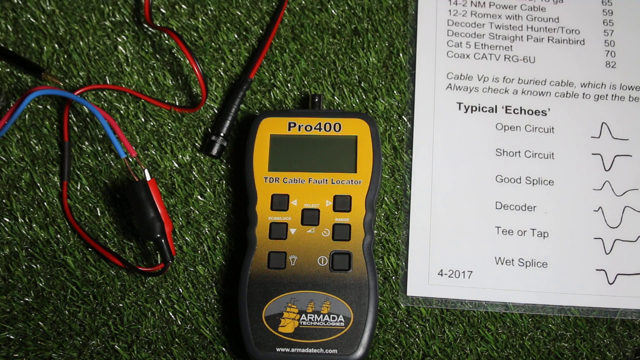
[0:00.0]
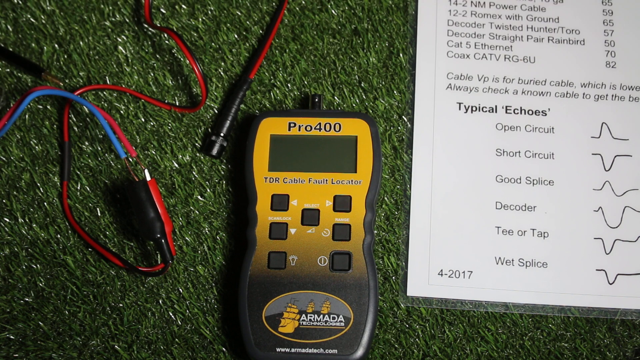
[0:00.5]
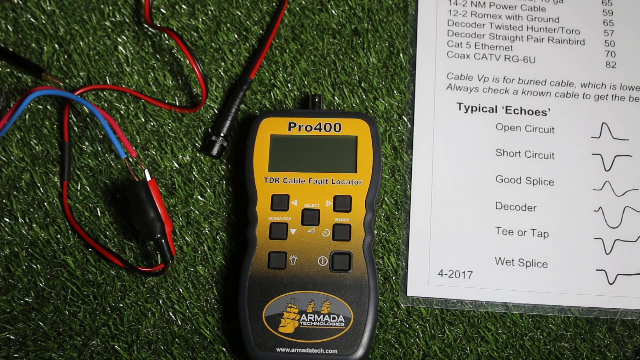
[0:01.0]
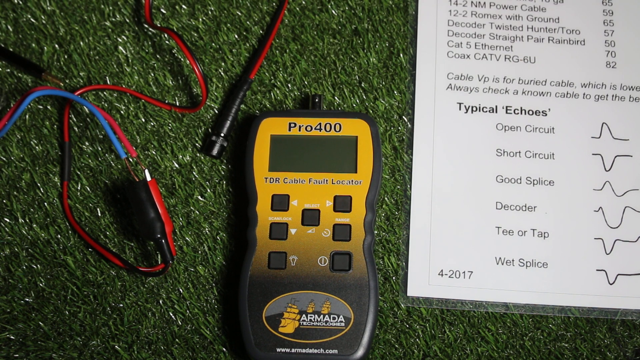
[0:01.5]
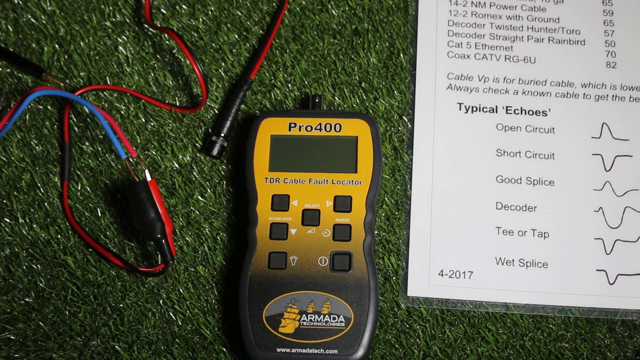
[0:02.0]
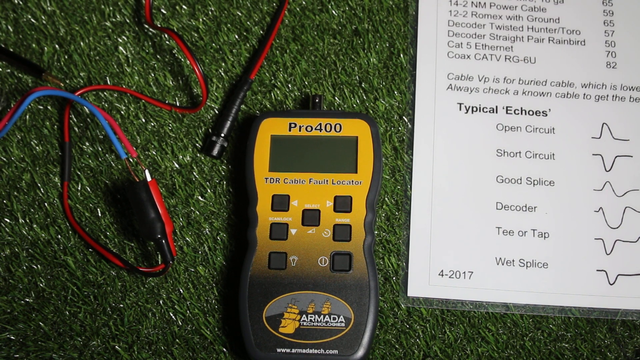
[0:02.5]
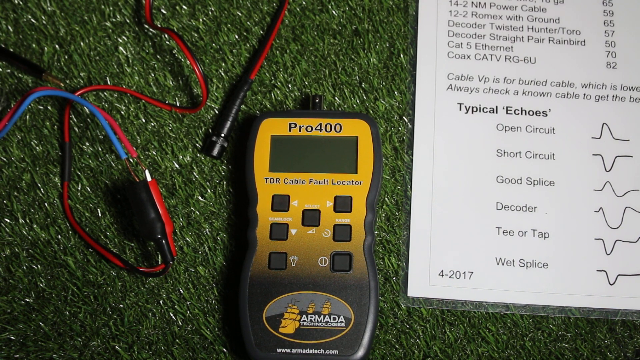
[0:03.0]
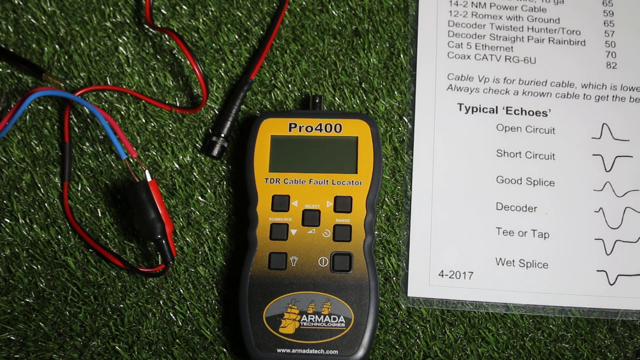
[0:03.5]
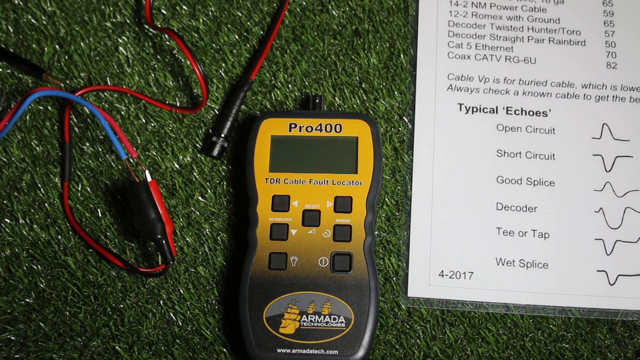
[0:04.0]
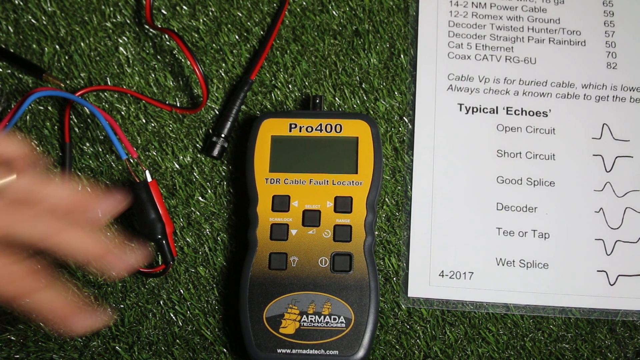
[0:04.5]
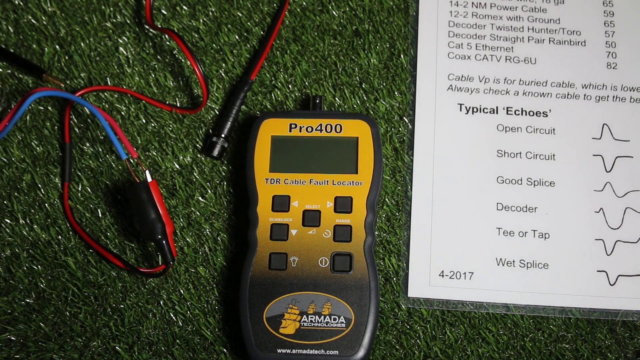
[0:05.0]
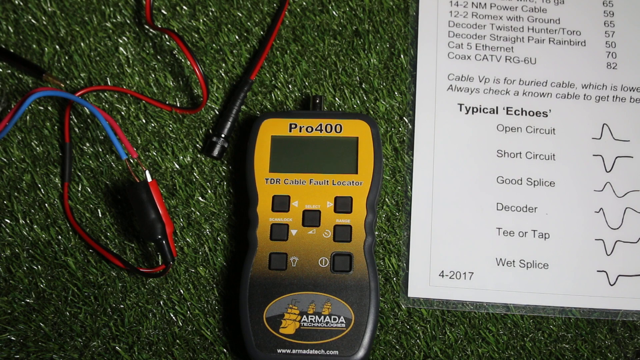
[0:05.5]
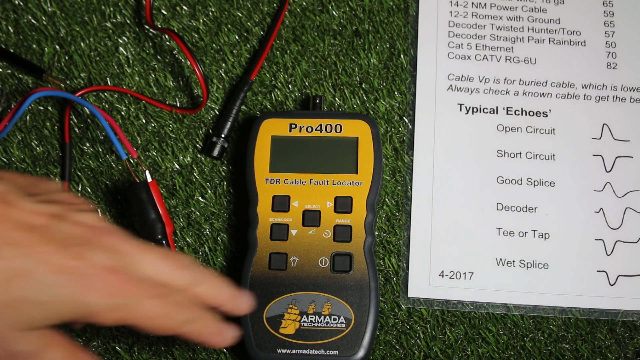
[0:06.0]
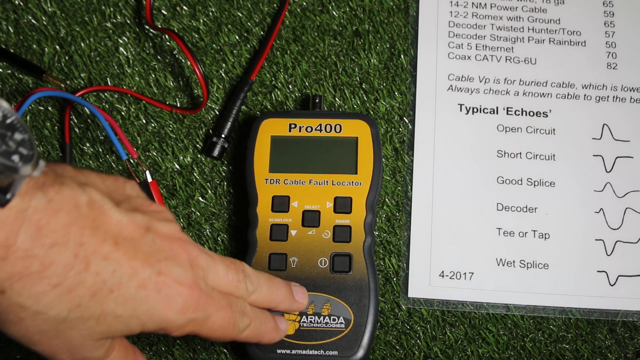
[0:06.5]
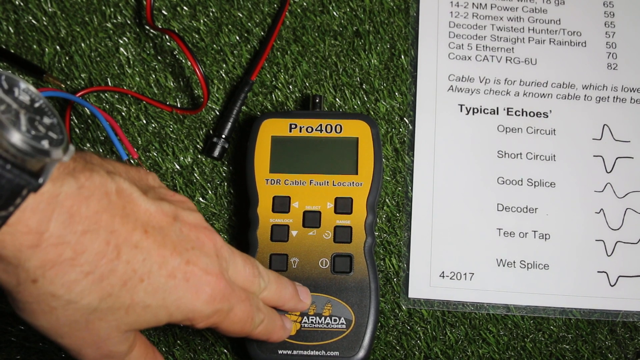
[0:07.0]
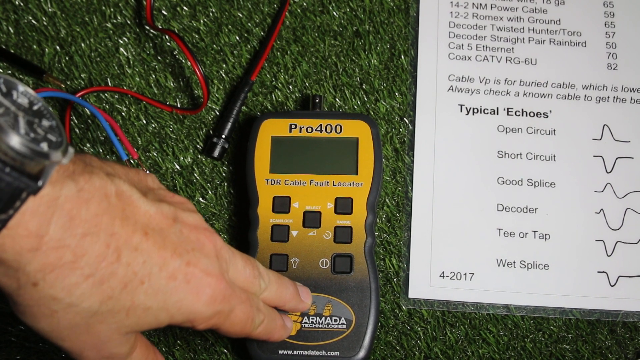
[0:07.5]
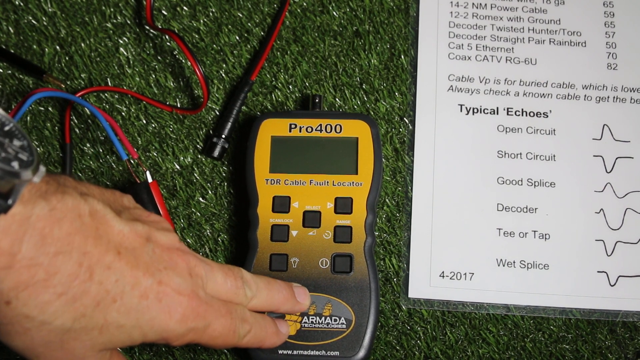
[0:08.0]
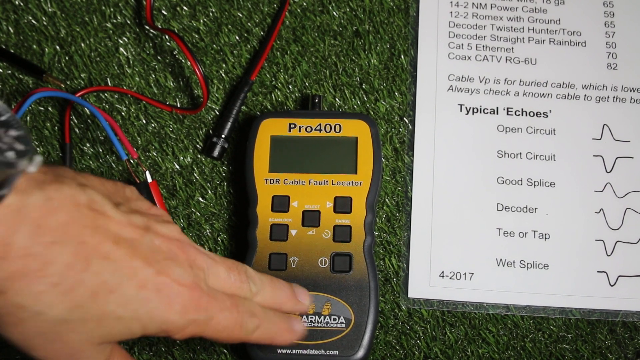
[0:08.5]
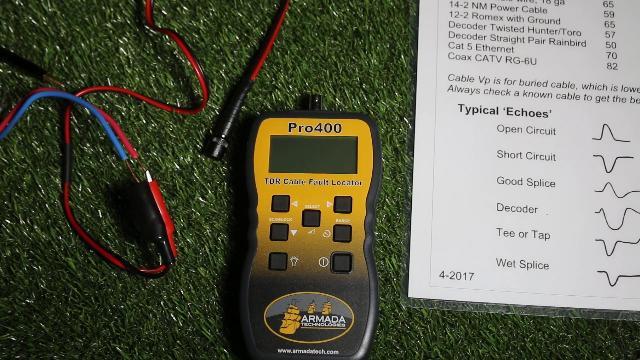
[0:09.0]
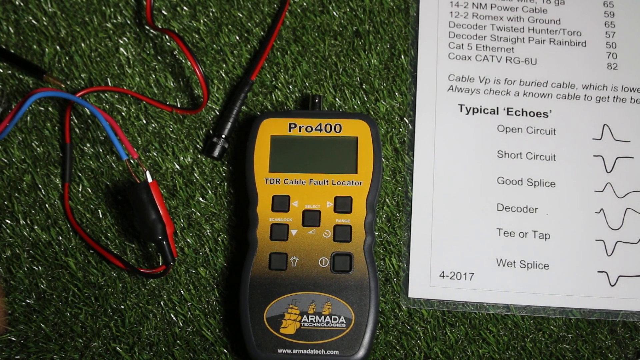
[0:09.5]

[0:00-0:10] A device that looks like a walkie-talkie or remote control, called Pro 400, is shown. A man's left hand comes into the frame, leaves, then comes back in and pushes a button. He wears a black watch band with a large watch face. He reaches in and pushes the large oval button on the bottom, which says "Armada", and holds on to it with two fingers for a moment. The apparatus rests on grass that looks like it might be fake turf. To its left are wires: one blue wire and one really long red wire that attaches to a black end connection piece. On the right is a piece of paper showing "typical echoes", with diagrams of them as well as their names.